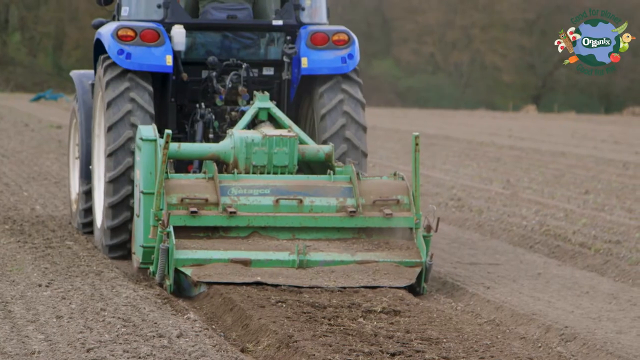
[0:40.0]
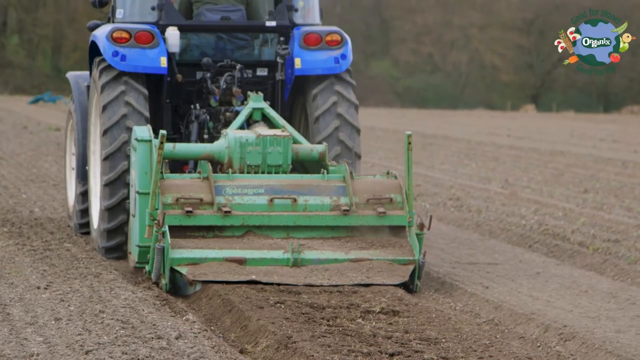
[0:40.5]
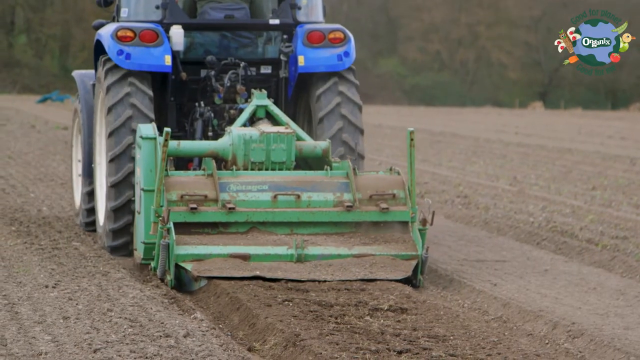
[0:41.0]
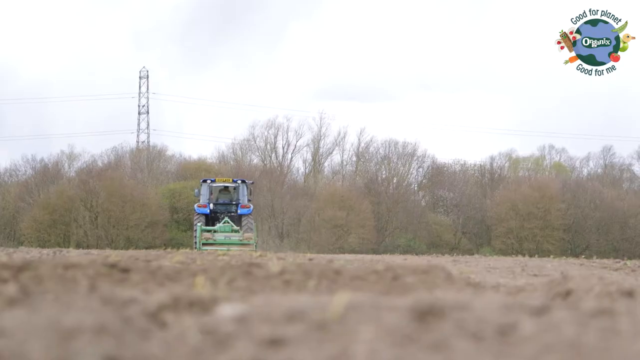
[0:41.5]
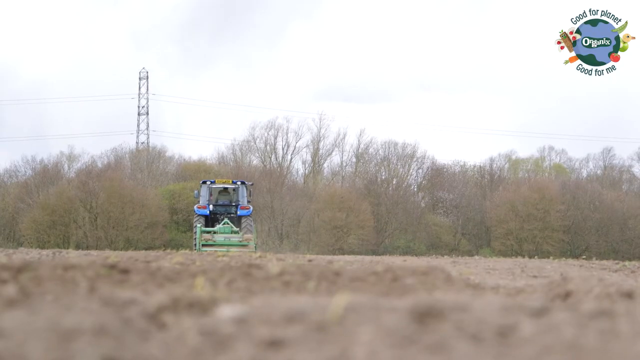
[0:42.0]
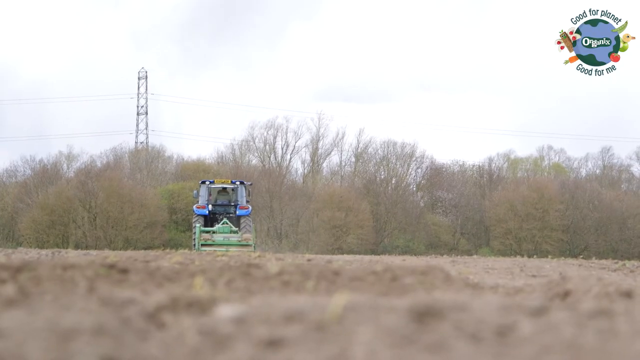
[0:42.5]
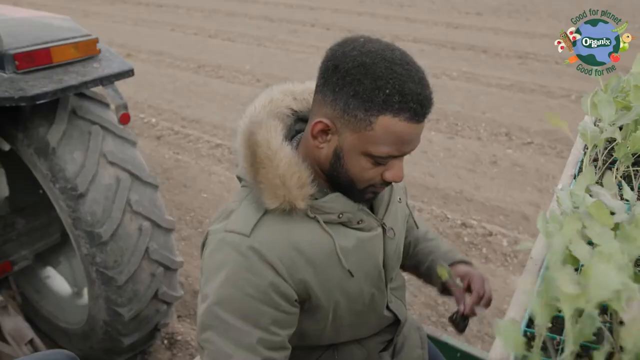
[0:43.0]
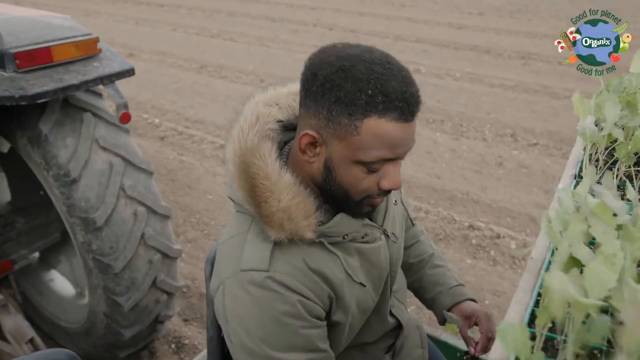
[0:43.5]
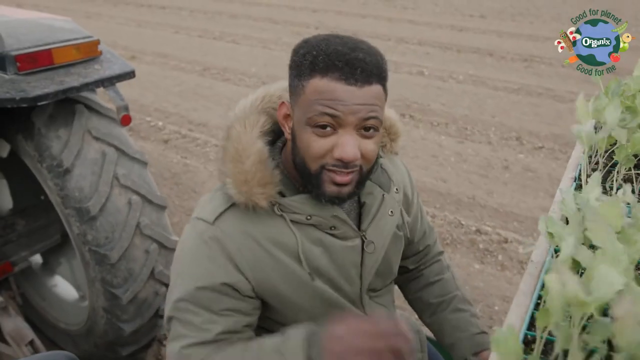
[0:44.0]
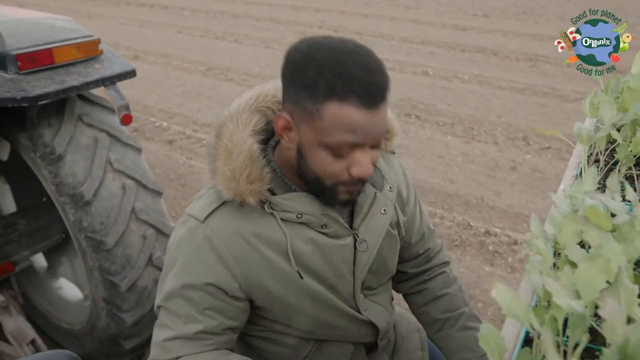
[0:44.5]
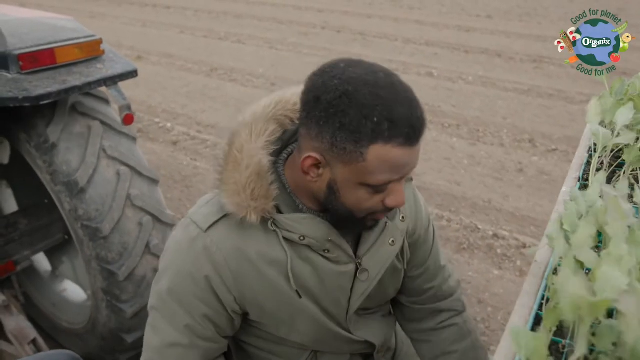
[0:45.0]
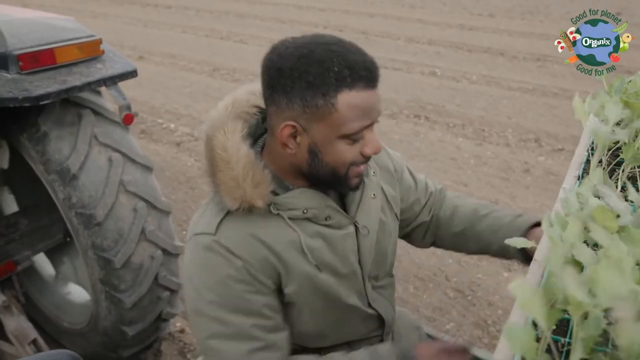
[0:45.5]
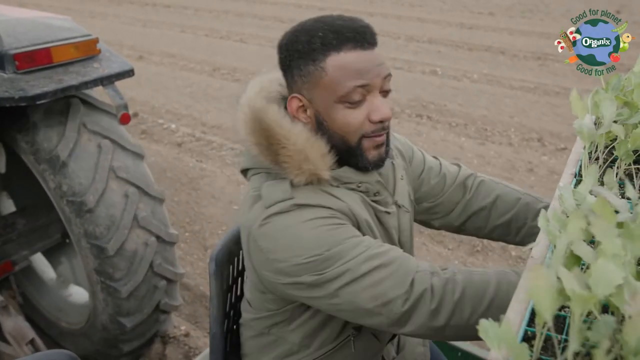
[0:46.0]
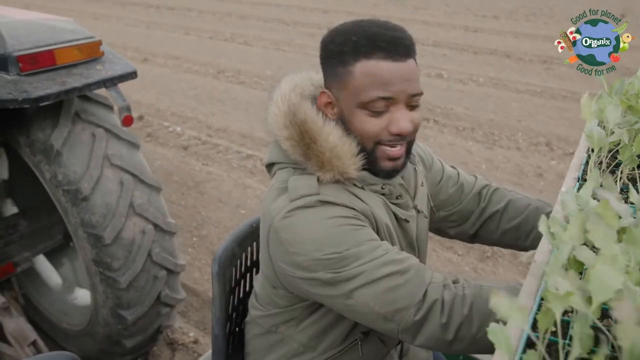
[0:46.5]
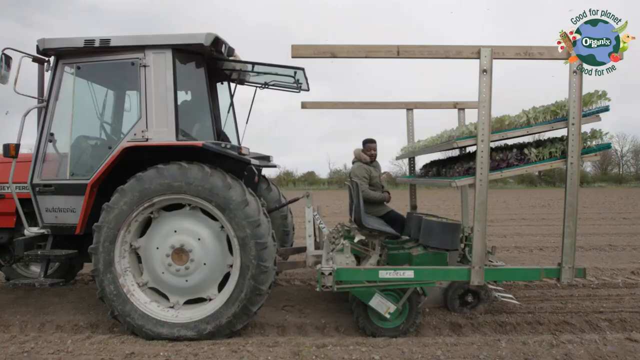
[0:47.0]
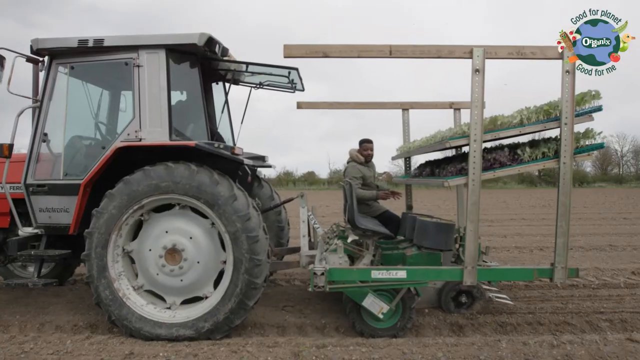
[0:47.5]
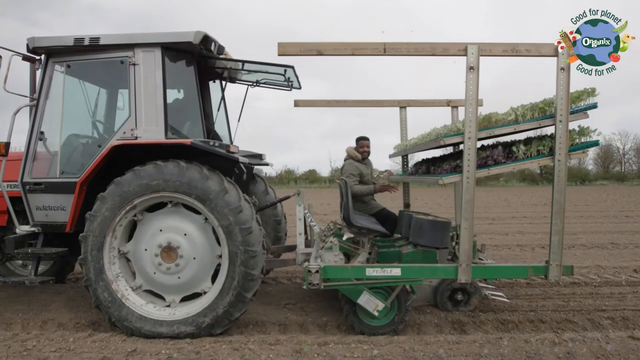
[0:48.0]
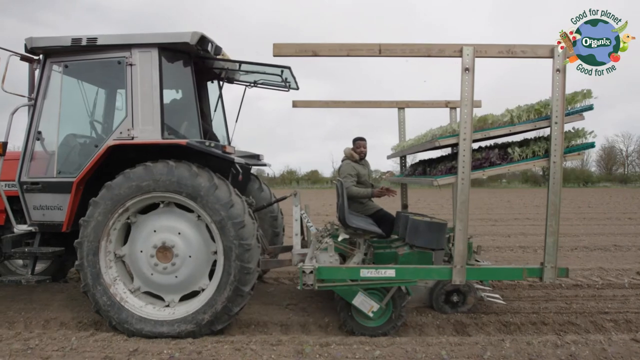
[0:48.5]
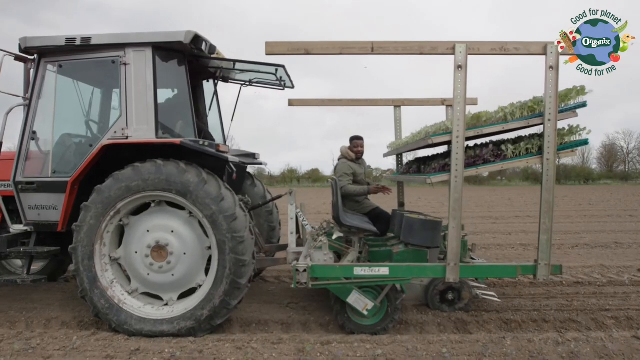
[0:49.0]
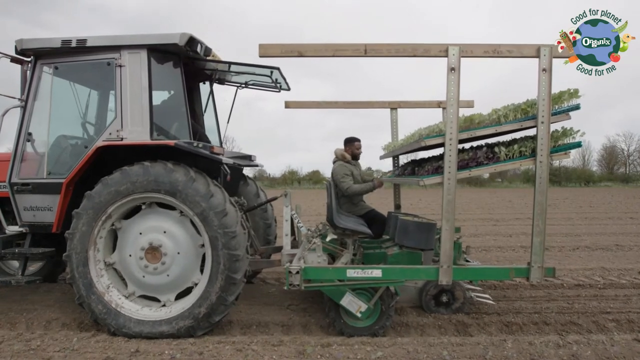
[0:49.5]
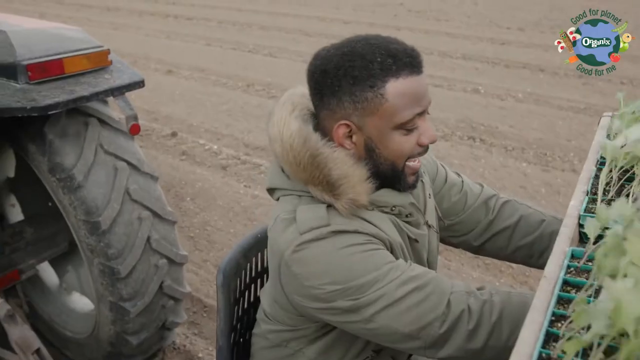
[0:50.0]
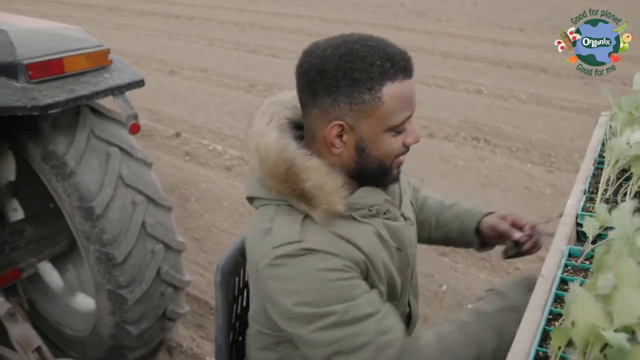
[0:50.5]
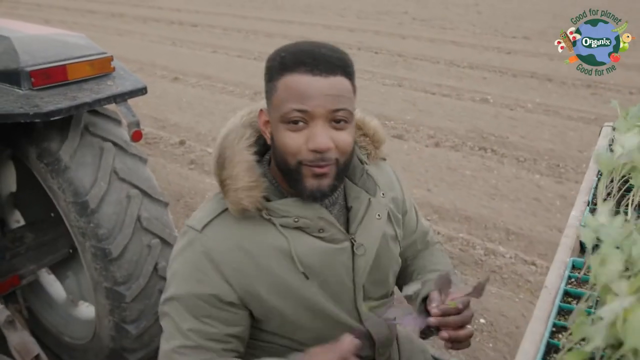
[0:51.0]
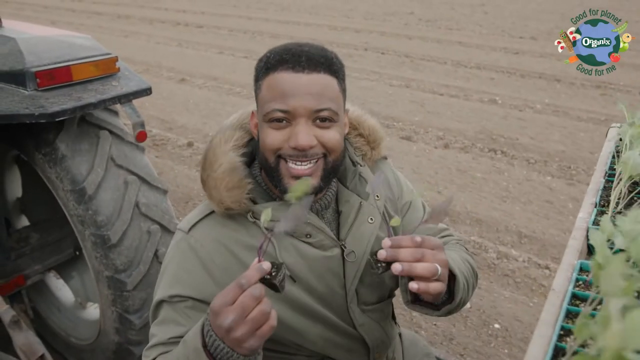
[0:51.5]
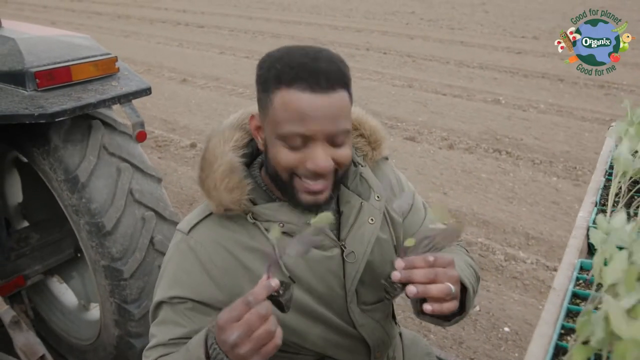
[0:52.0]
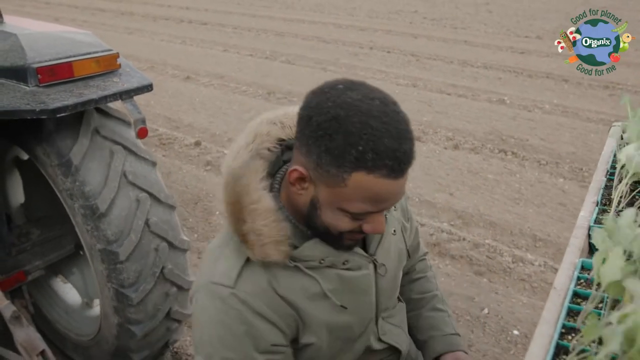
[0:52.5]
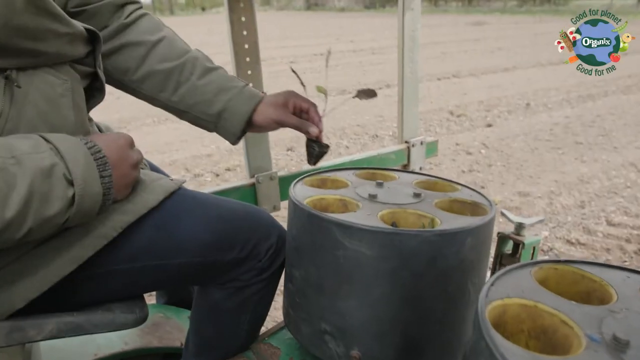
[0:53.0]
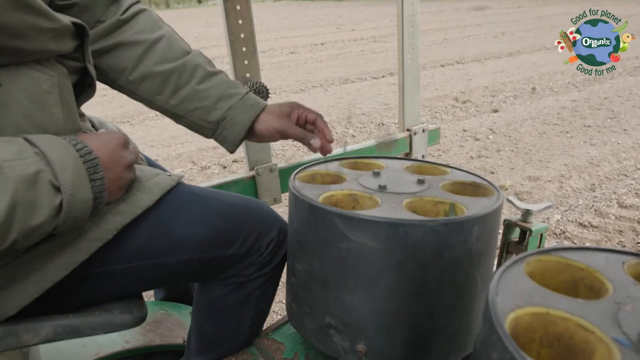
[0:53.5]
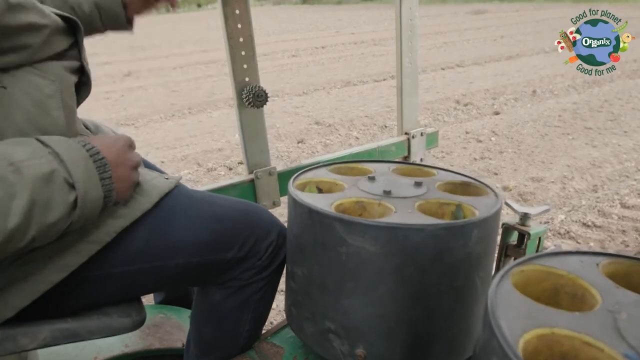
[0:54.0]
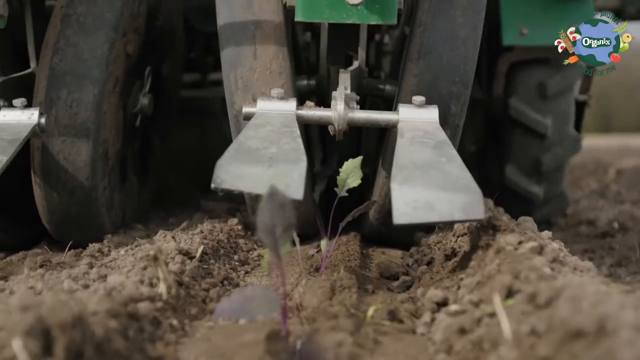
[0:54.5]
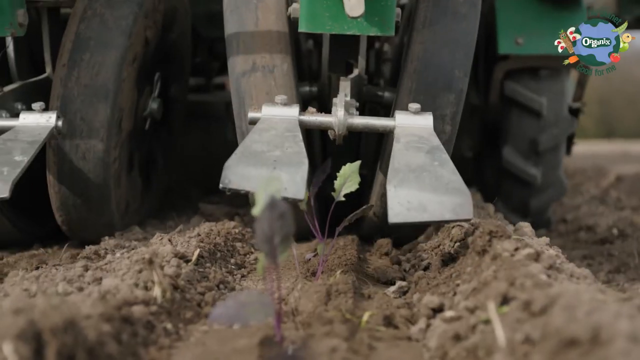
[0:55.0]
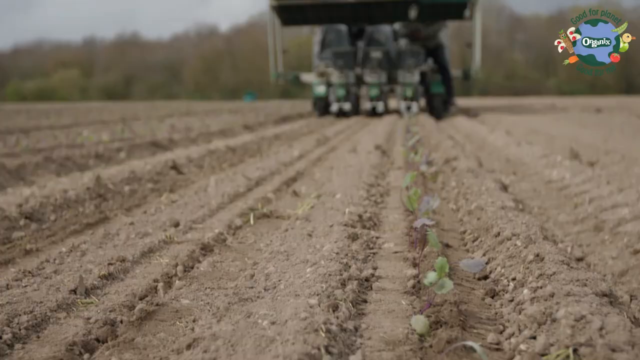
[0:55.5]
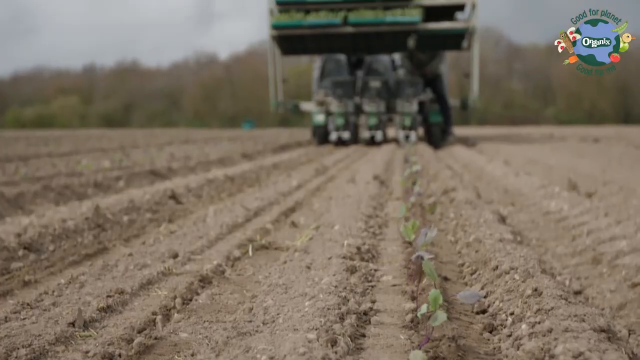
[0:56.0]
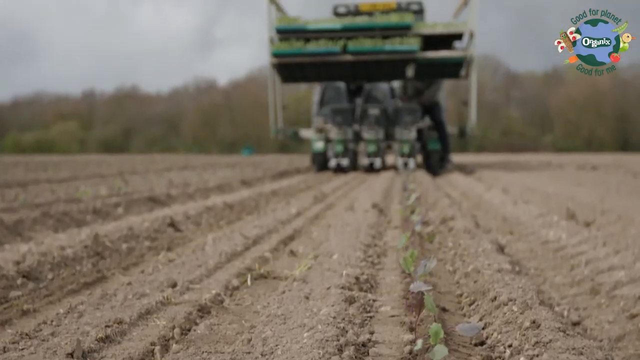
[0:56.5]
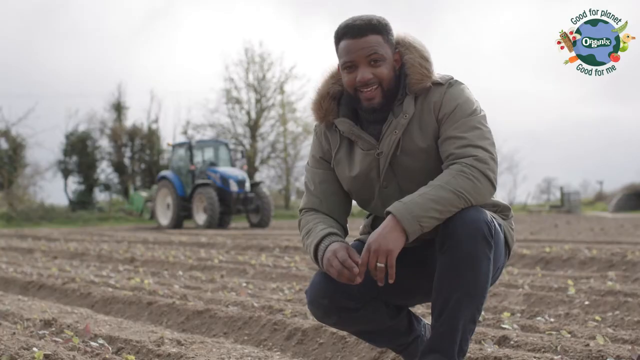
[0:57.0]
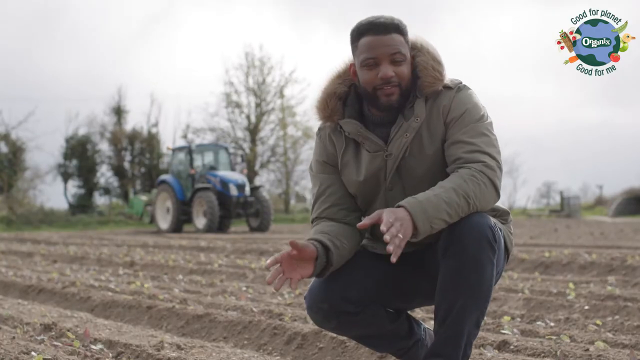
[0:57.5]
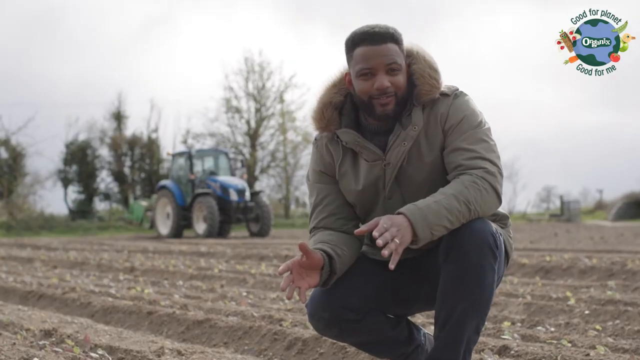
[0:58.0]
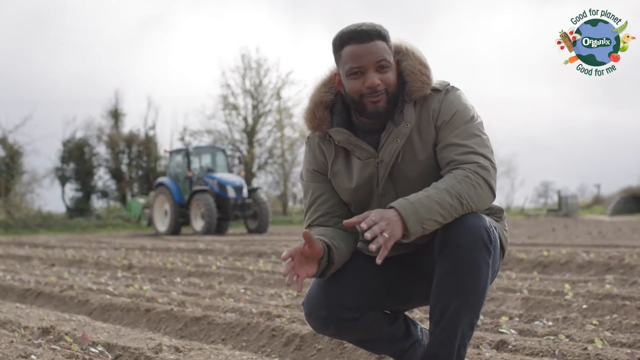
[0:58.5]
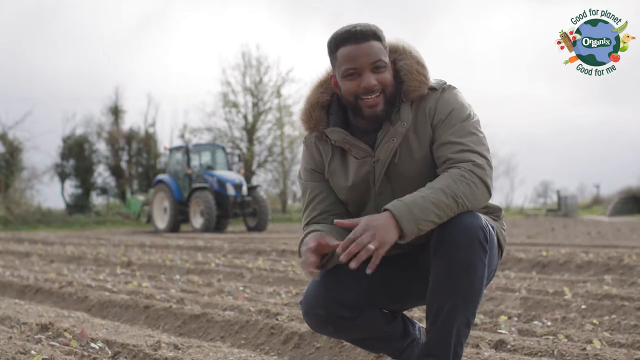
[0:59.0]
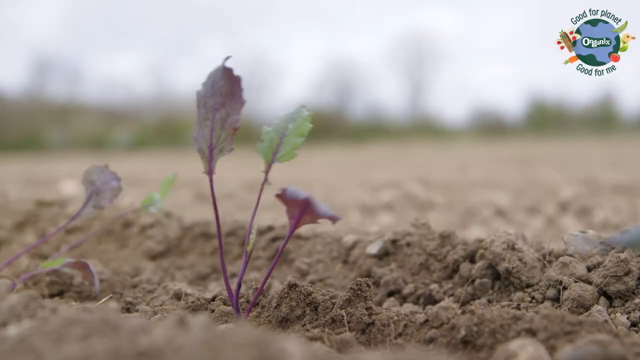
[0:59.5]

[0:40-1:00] A colourful background with a lot of fruit decorating it shows the title "on the farm with JB", with no banner. A friendly man, presumably JB, appears wearing a fluffy jacket; the setting around him looks very cold, and a lot of hay is visible in the background. He shows a small plant and some lettuce. A short shot shows JB on a tractor, appearing to explain how his farming methods work. Two other people, who appear to be male, are briefly shown in the background. JB is then seen harvesting the grass.